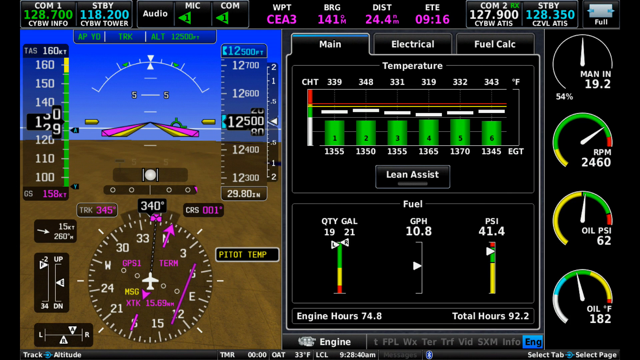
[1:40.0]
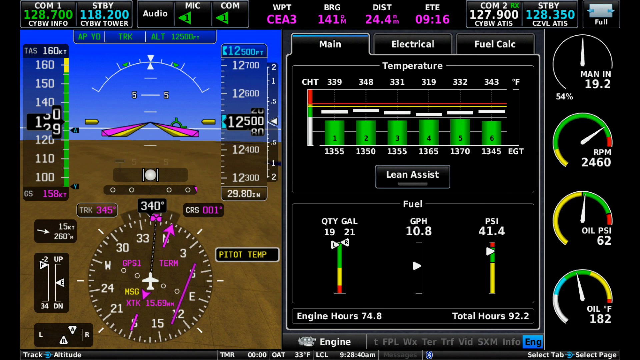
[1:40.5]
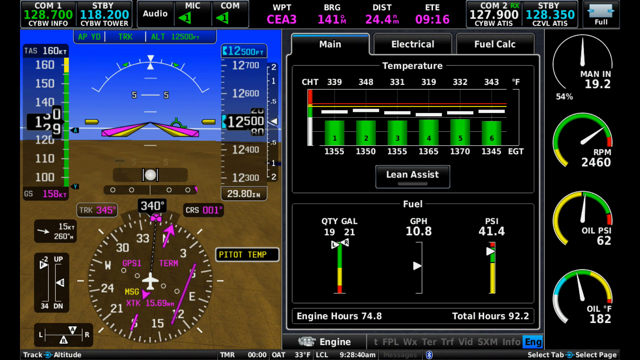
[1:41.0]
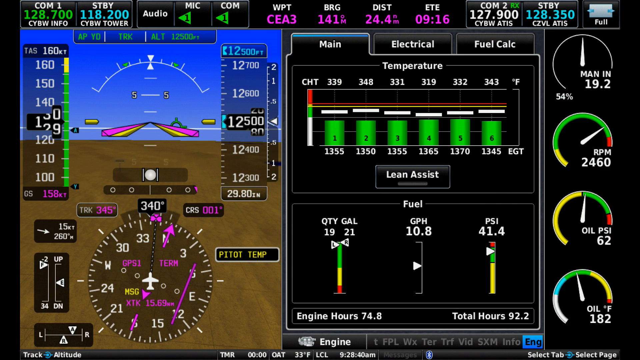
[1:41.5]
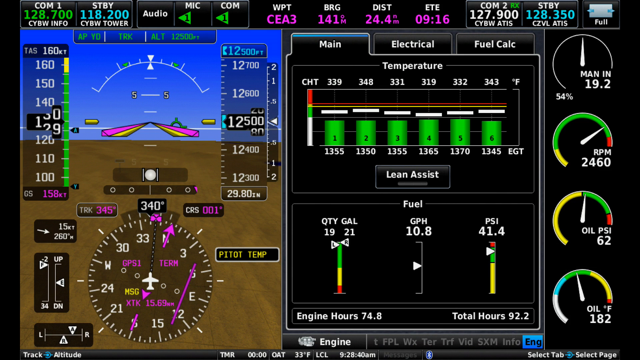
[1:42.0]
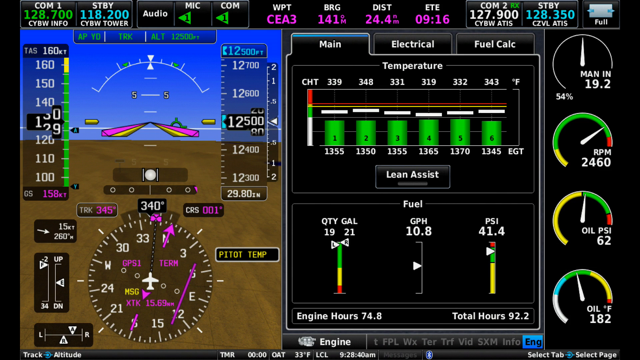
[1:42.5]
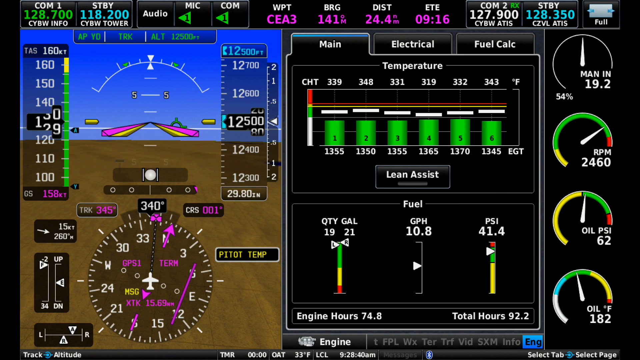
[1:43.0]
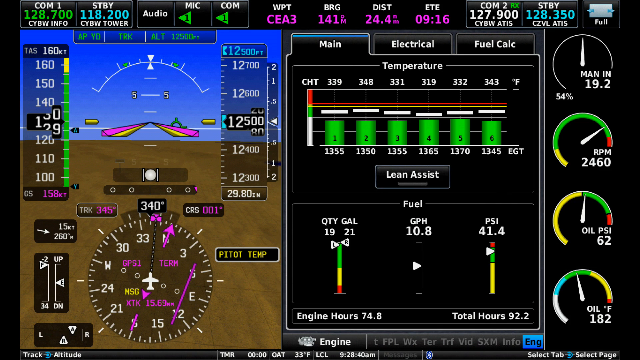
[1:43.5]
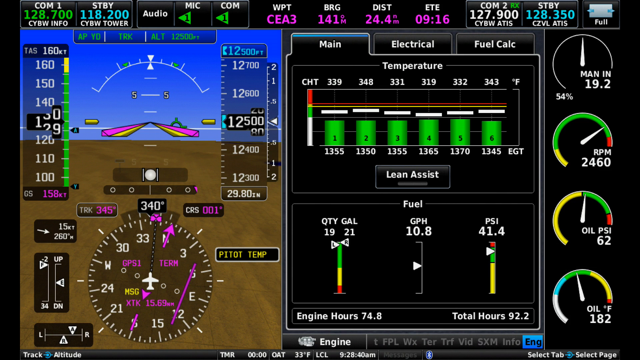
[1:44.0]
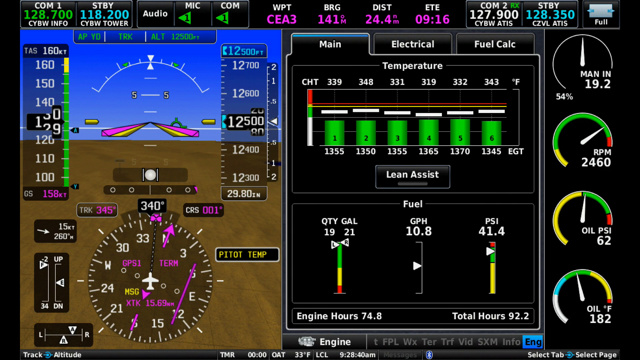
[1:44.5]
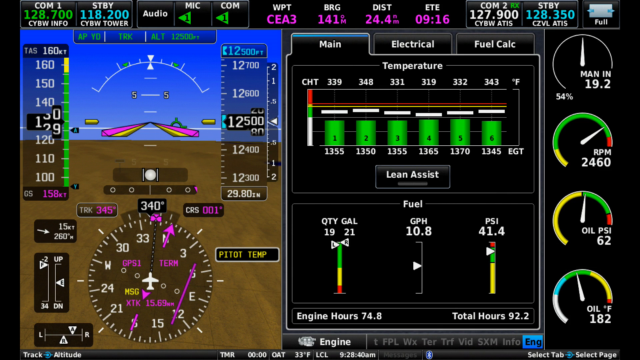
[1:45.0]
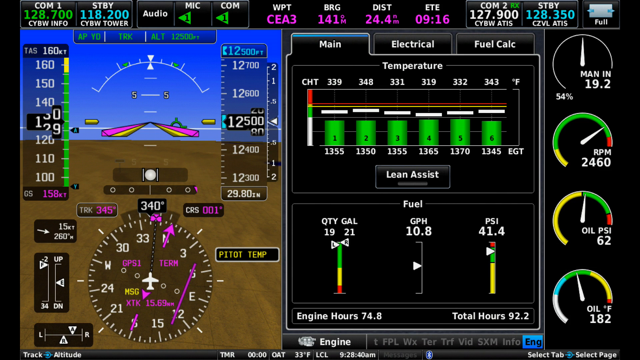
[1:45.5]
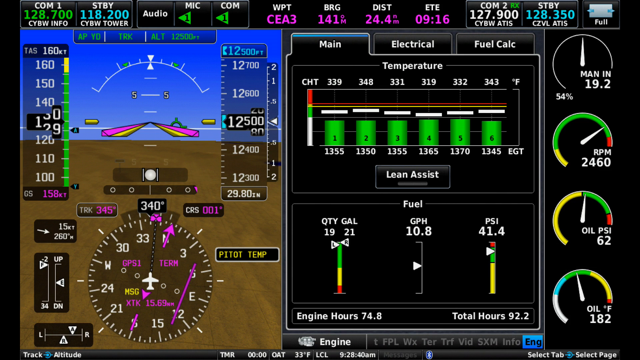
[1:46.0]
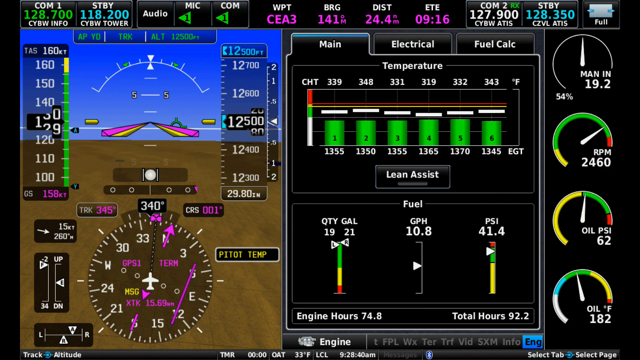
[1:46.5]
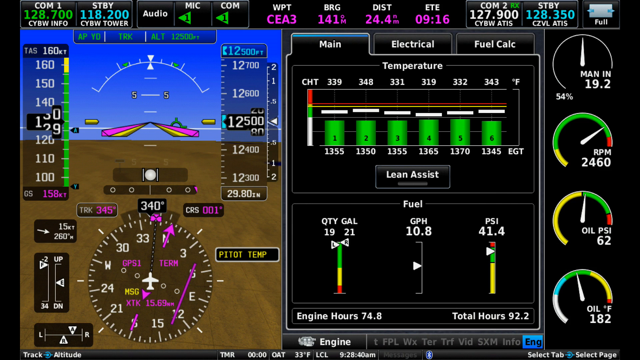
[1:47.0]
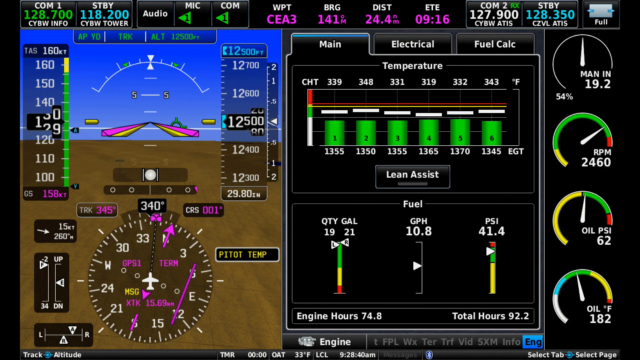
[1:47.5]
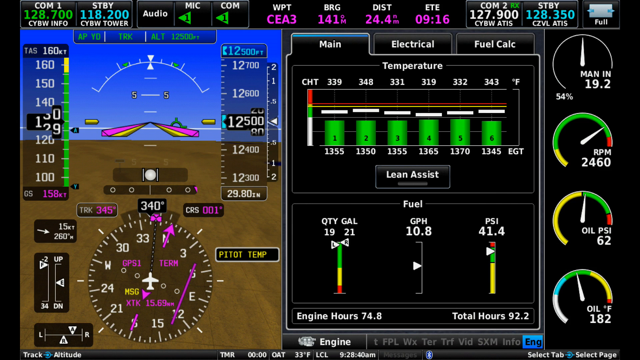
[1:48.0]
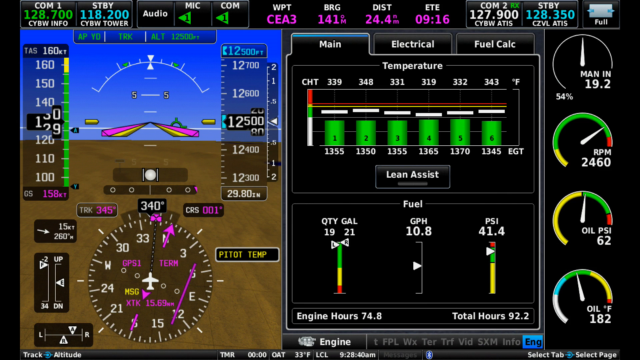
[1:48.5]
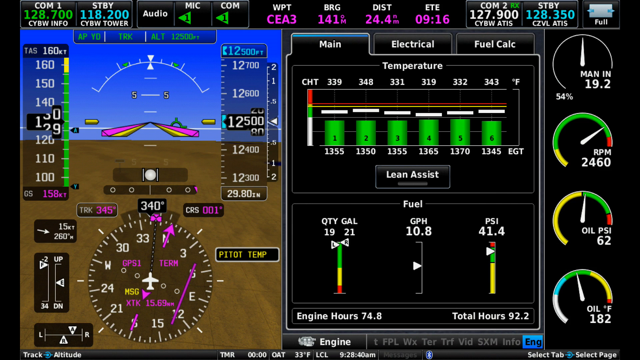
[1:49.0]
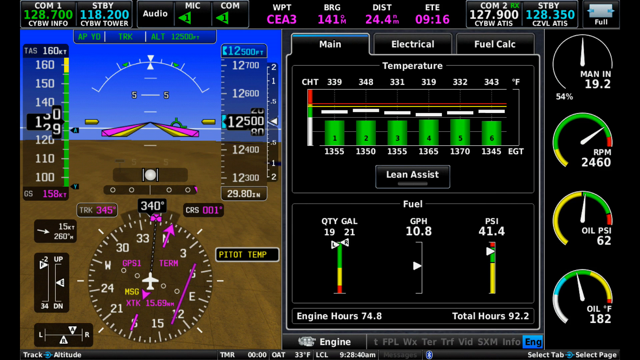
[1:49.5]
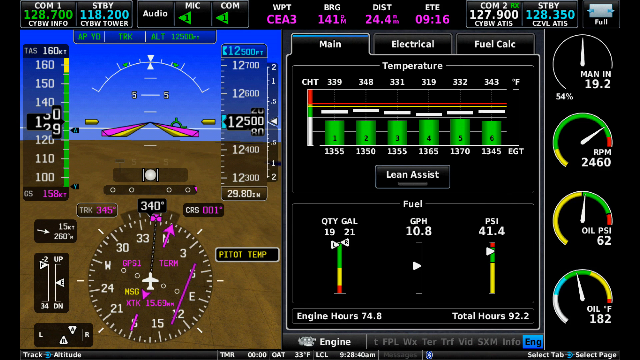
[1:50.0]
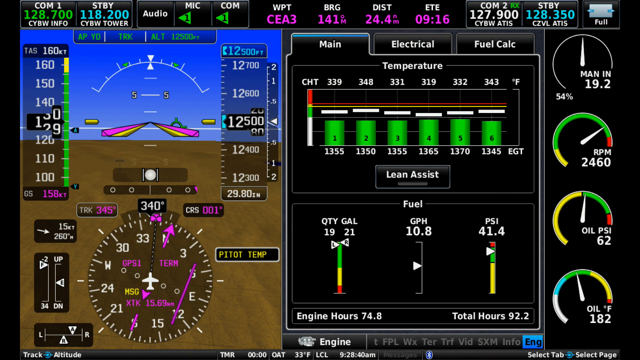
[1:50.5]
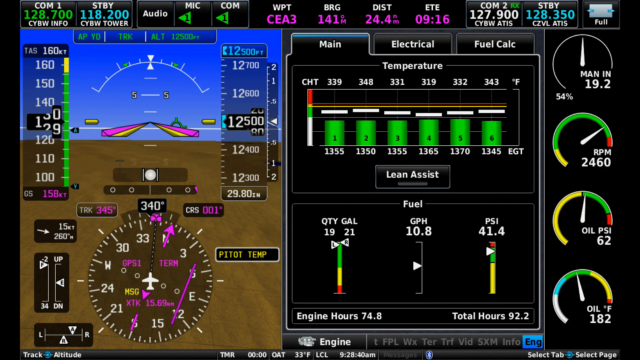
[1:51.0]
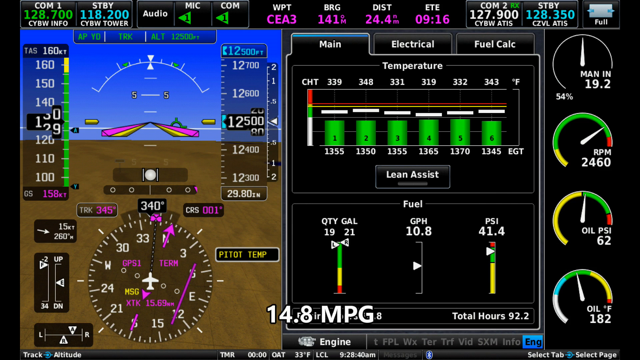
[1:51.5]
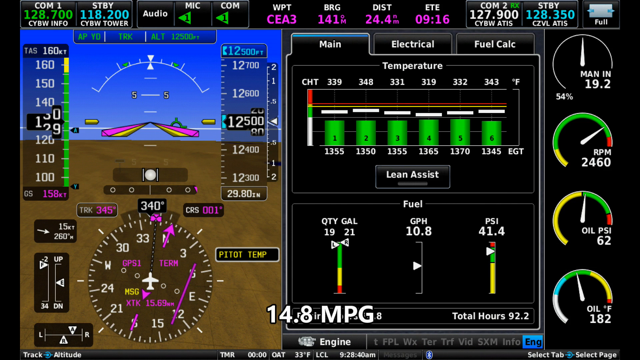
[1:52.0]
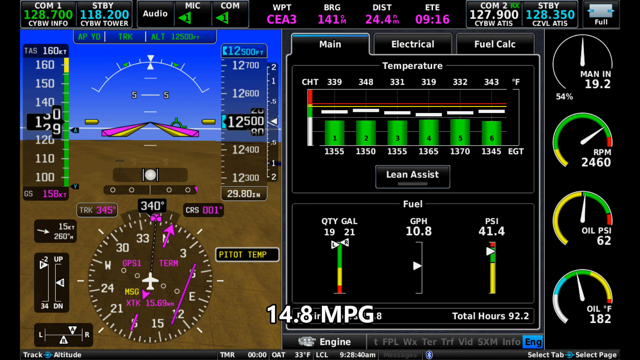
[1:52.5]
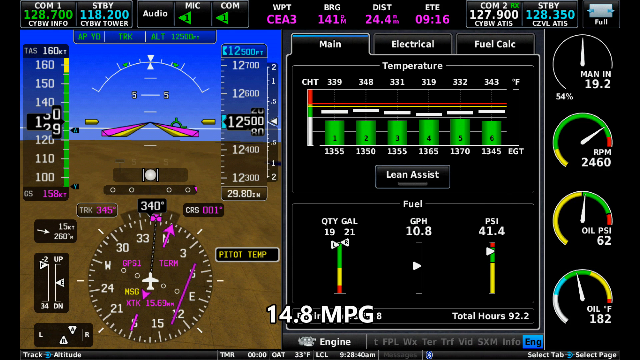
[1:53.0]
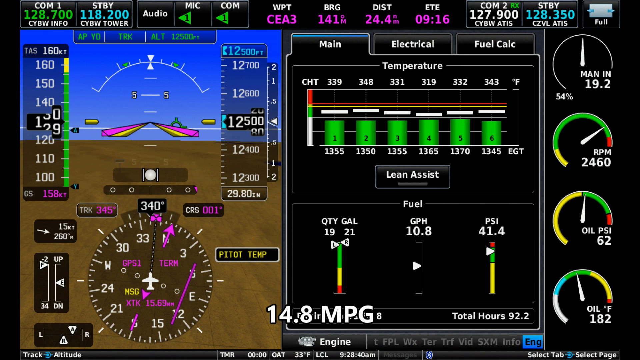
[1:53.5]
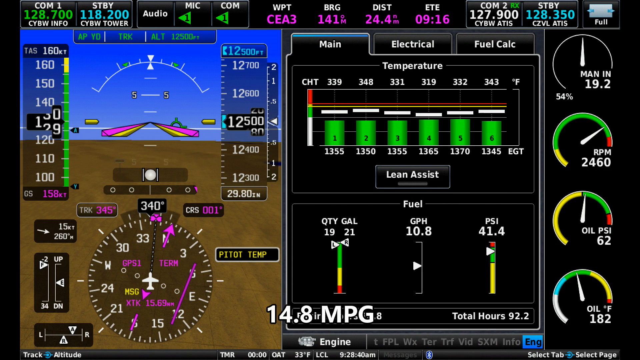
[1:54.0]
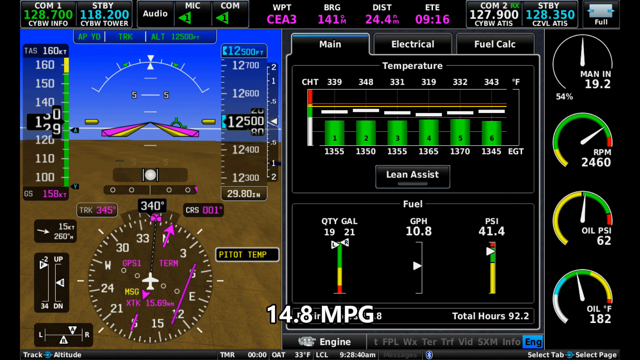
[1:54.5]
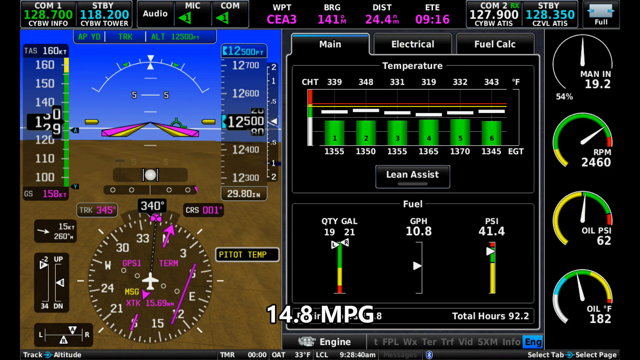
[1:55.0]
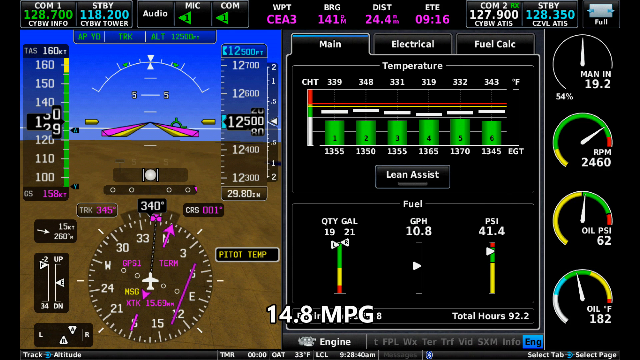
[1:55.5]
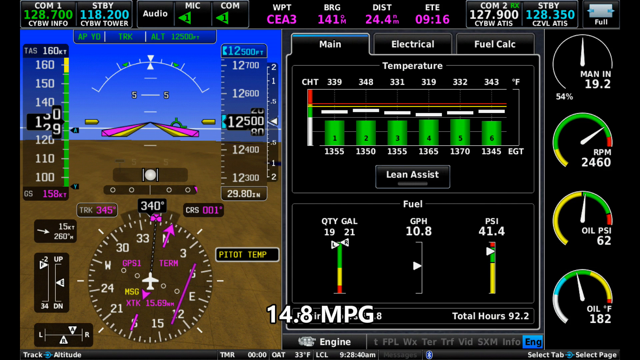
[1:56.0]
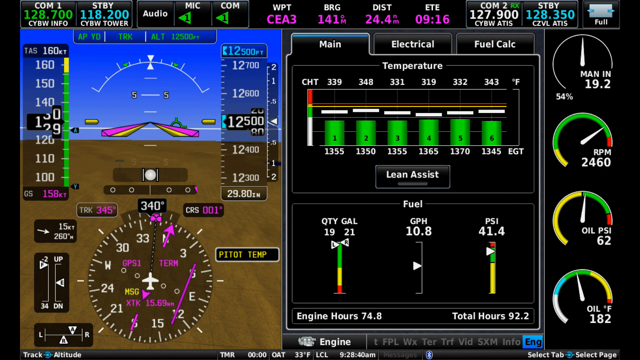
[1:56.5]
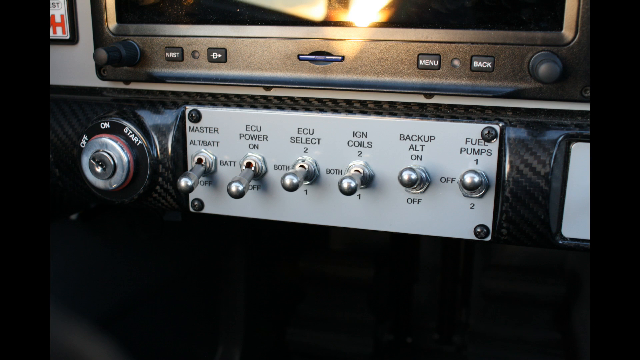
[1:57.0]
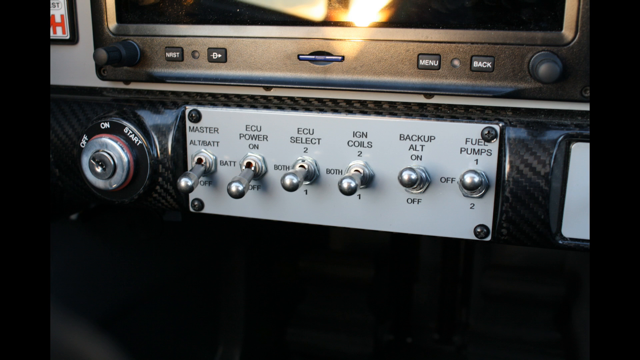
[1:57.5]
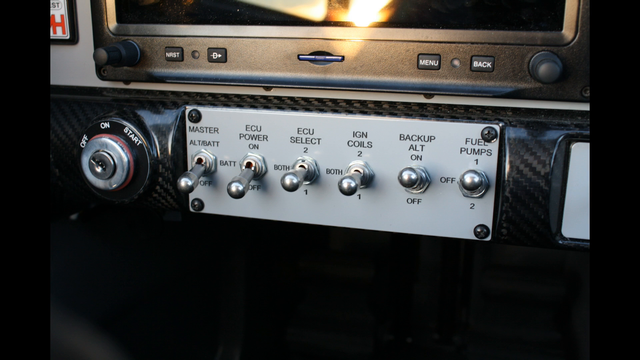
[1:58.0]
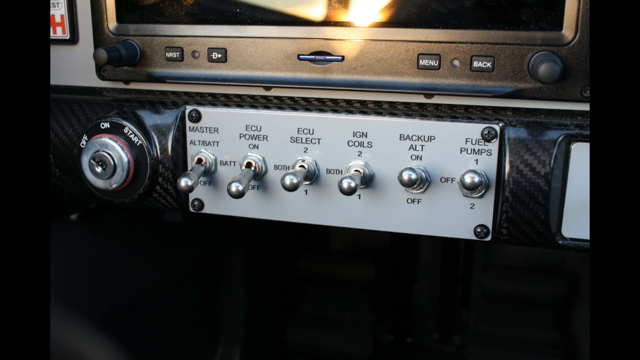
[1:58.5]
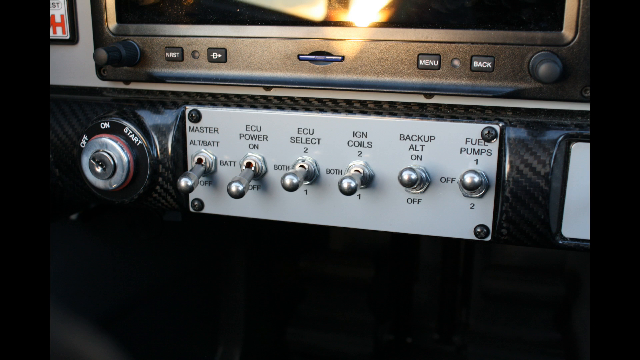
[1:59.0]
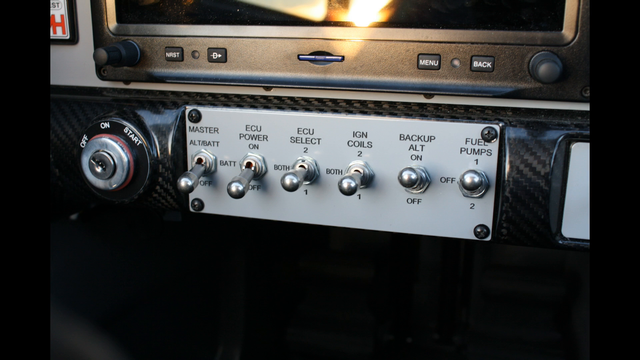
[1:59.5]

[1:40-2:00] A black screen on the right has sections such as "main," "electrical," and "fuel calc" in white text. A temperature section has six green cylinders numbered 1 through 6, with white text above beginning "CHT," and the cylinders are also marked "1,355, 1,350, 1,355, 1,365, 1,370, 1,345 EGT." A "lean assist" button is below, along with a fuel section reading "quantity gallon 1921, GPH 10.8, PSI 41.4" and text reading "engine hour 74.8, total hours 92.2." On the right, what look like speedometers read "man in 19.254%, RPM 2460, oil PSI 62, oil Fahrenheit 182." The left side shows what appears to be distance, speed and pilot temperature information. Text at the top reads "COM1 128.700 CYBW info, STBY 118.200 CYBW tower, Audio Mic 1, COM1 WPT CEA3, BRG 141M, Distance 24.4, ETE 916, COM2 RX 127.900, CYBW ATIS, STBY 128.350, CZBL ATIS," with a little box of white text that says "fuel." White text pops up that says "14.8 mpg." The scene then changes to the inside of a car, showing a key ignition marked "off," "on," and "start," and small switches labeled "master," "ECU power," "ECU select," "IGN coils," "backup alt," and "fuel pumps." The master and ECU power switches are off, ECU select and IGN coils are at both, backup alt is on, and fuel pumps is off.